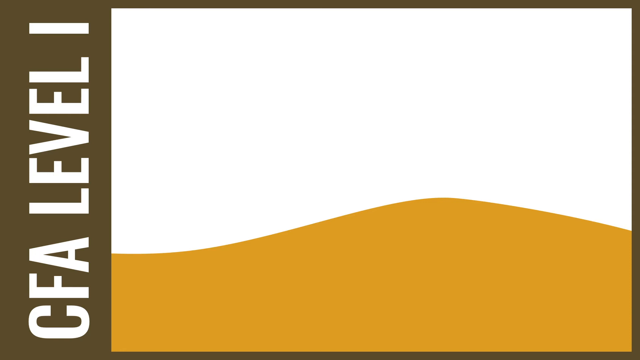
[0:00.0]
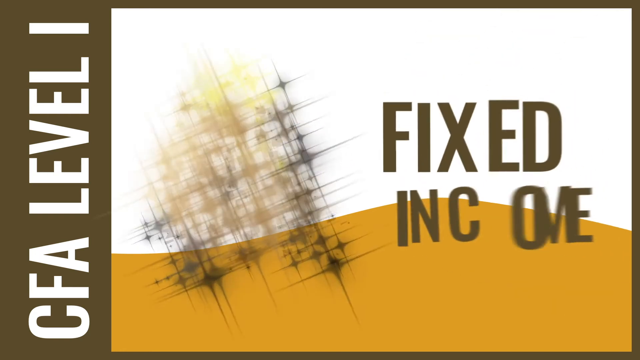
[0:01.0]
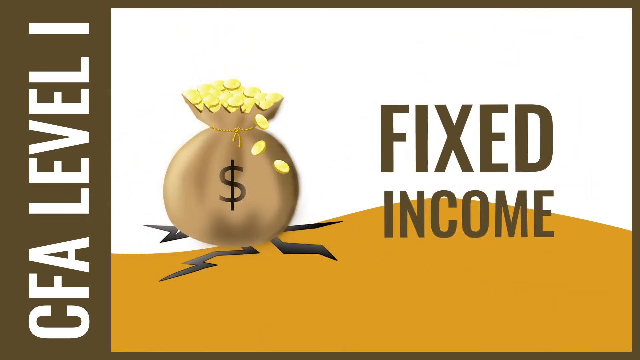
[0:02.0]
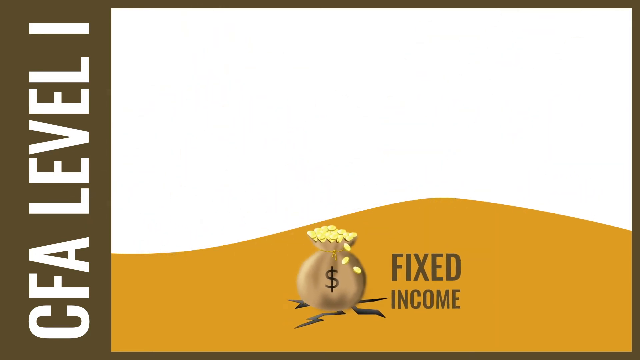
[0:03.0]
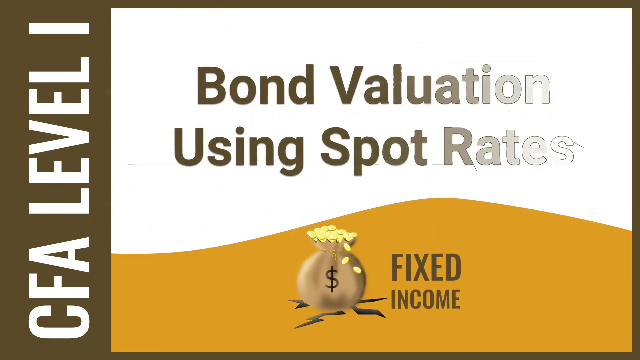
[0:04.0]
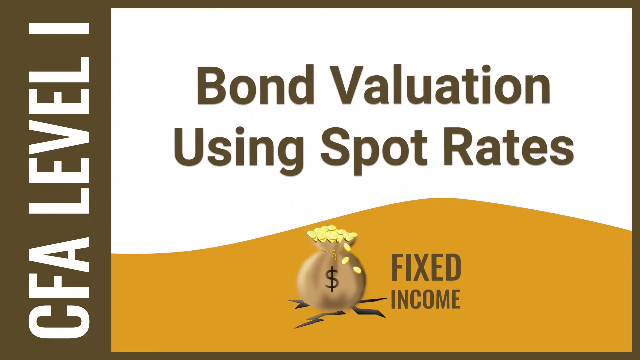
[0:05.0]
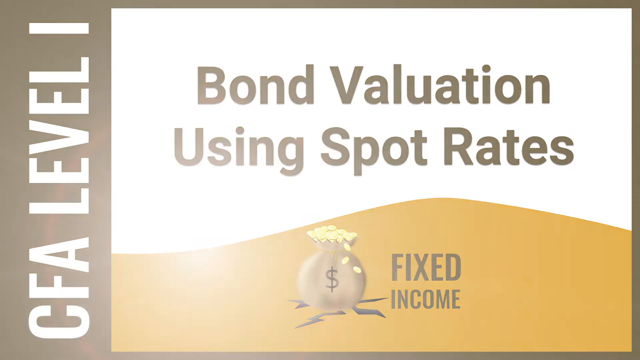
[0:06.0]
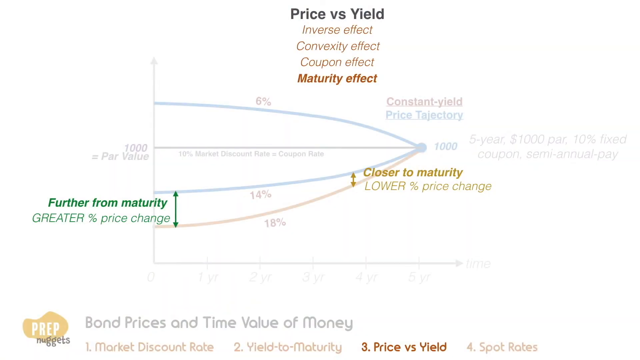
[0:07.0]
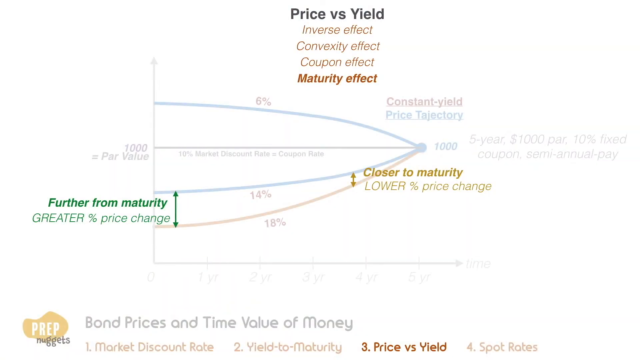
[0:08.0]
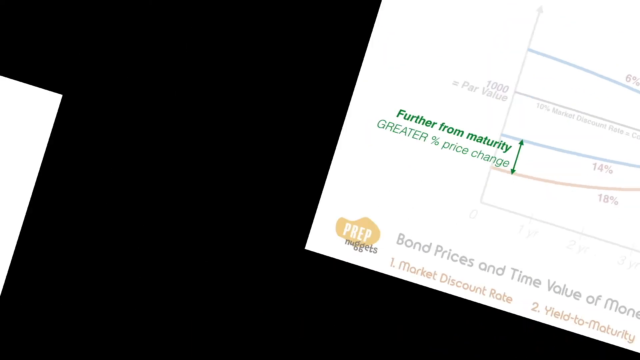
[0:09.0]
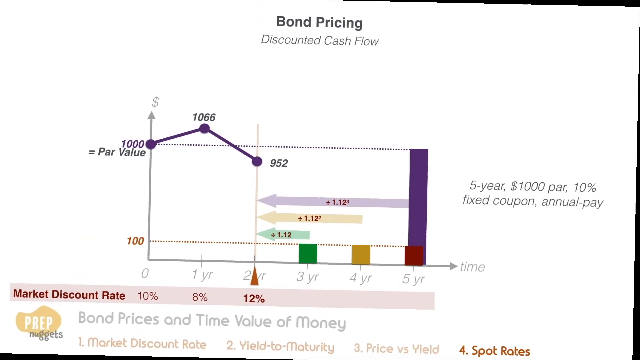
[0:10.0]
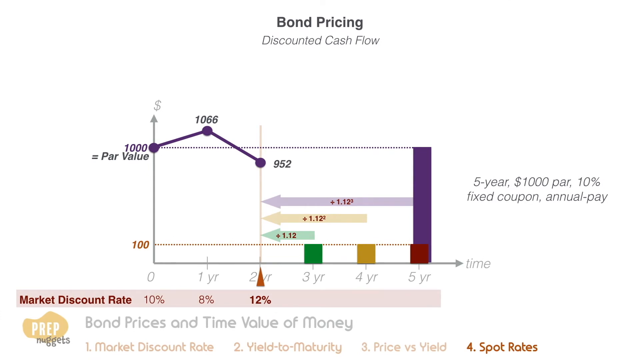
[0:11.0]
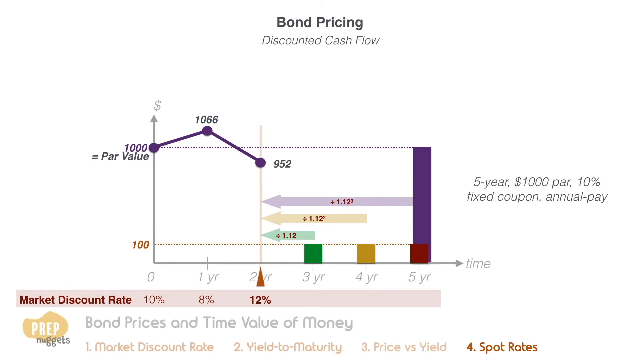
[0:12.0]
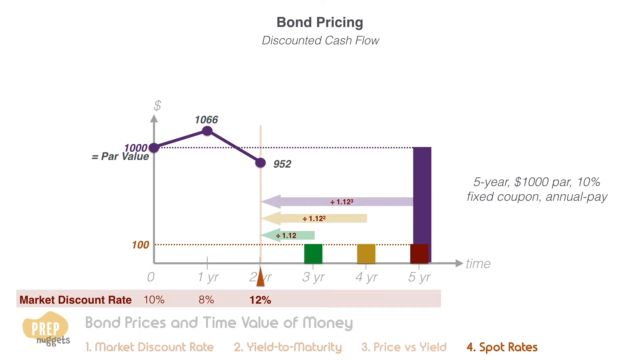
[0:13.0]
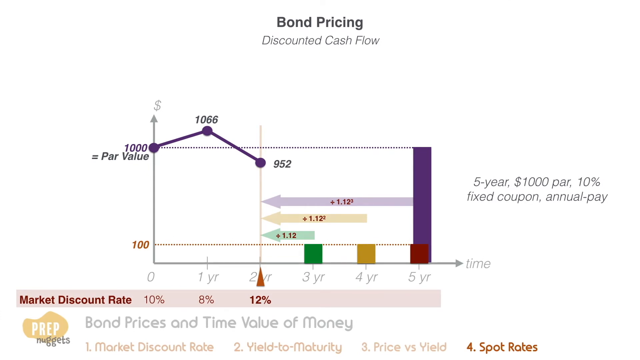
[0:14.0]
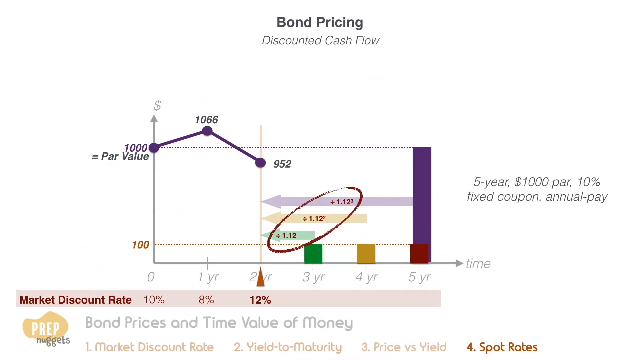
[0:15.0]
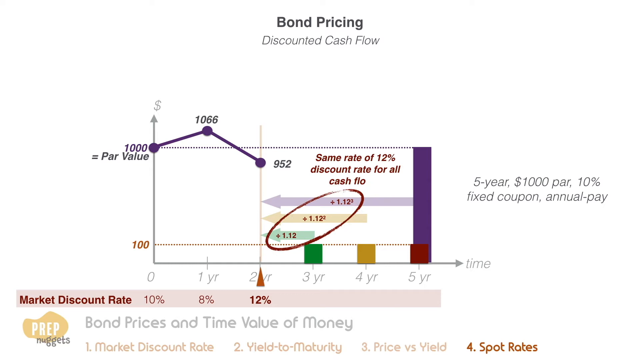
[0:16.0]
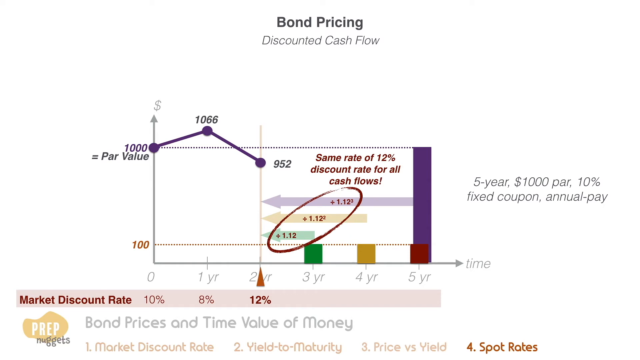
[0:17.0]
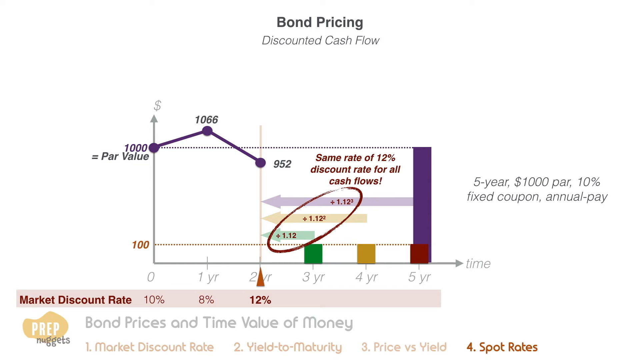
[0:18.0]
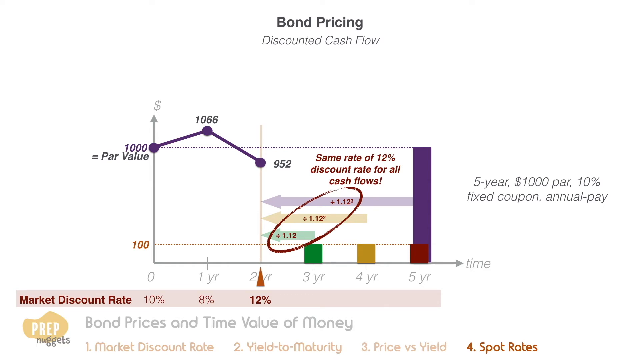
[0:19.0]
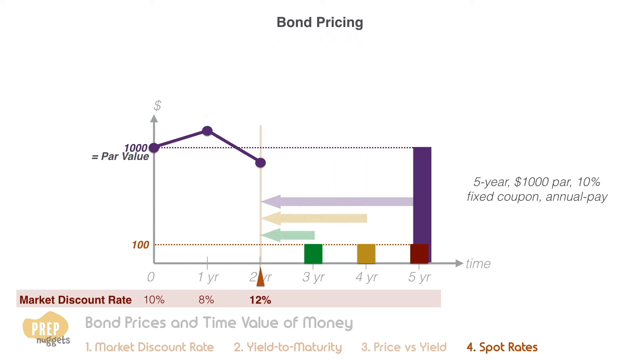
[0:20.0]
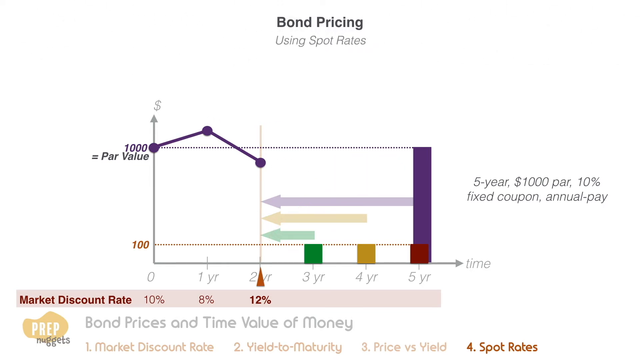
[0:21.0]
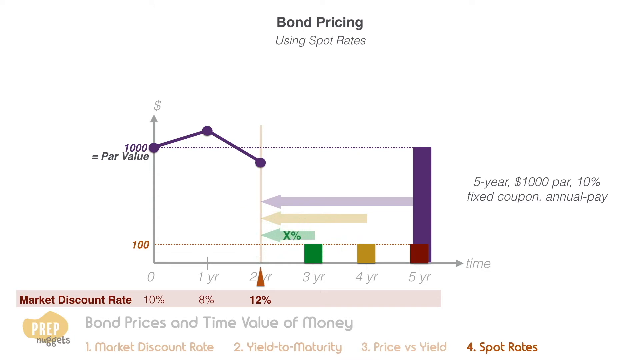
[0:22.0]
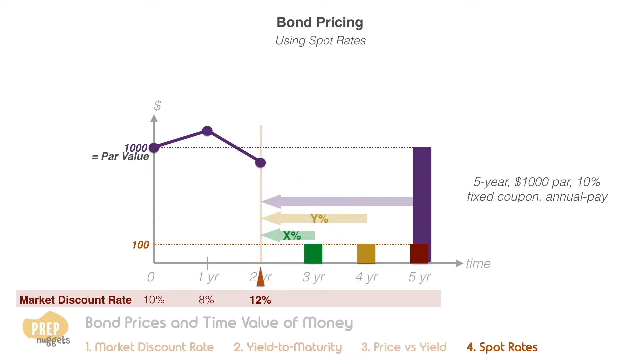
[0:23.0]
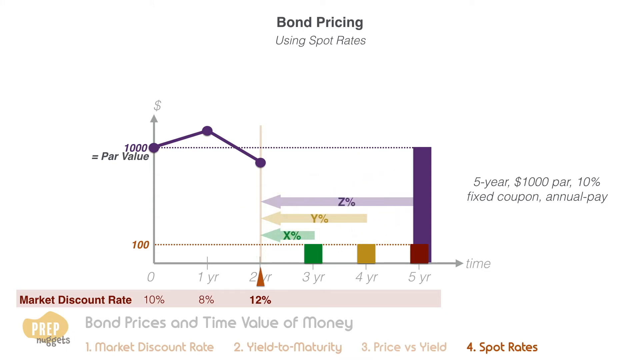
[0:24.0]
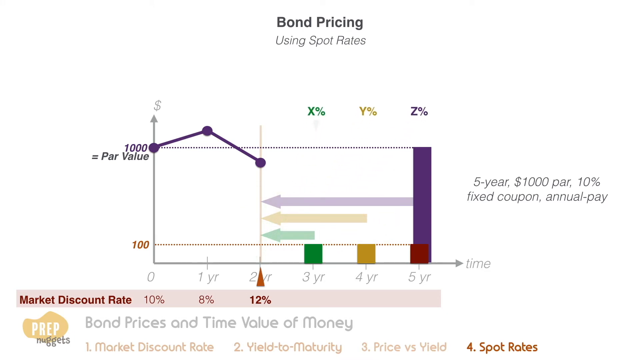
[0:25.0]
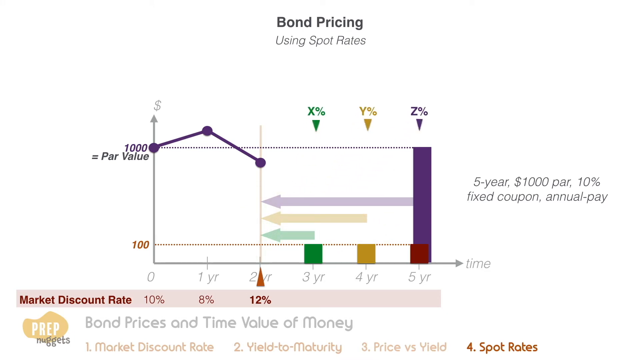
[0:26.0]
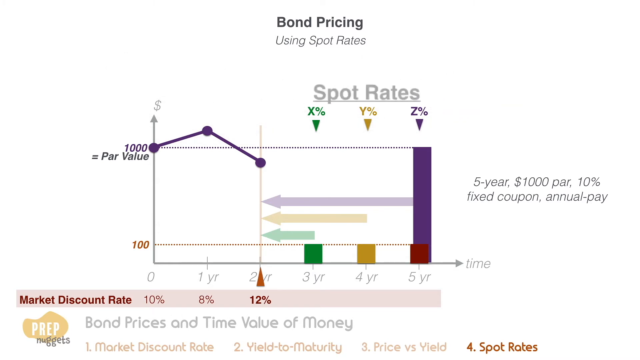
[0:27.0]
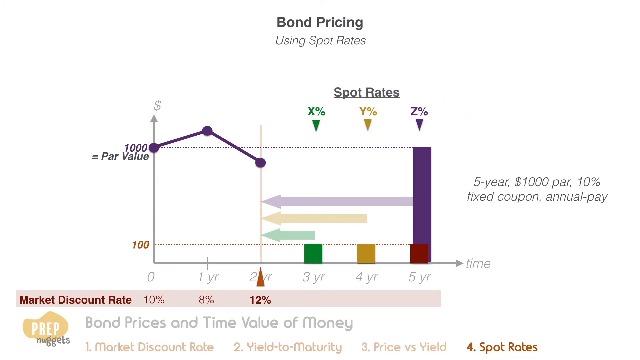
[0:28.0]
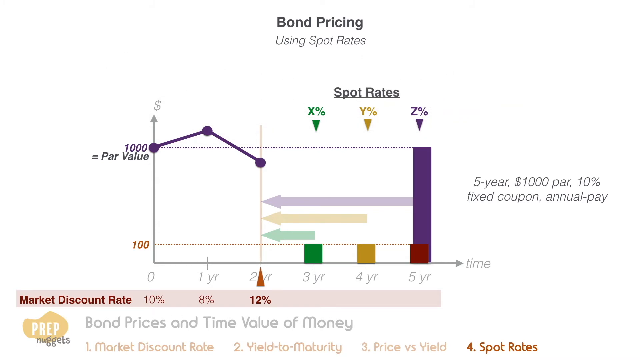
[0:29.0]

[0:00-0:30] A banner on the side reads "CFA" alongside what looks like a picture of a dune hill. Text then reads "fixed income" with a money bag next to it, followed by "bond valuation using spot rates". Once that leaves the screen, a graph appears dealing with price versus yield, the inverse effects, the convexity effects, the coupon effect and the maturity effect. The graph shows 1000 par value on the Y scale and apparently time on the X scale, and it has three different lines. At the bottom, text reads "bond prices and time value of money" with a numbered list that includes "market discount rate" and "price versus yield". The video very quickly moves to a different graph titled "bond pricing", where the Y axis says 1000 equals par value and starts at 100, and the X axis shows the years. It appears to be looking at year 2 or year 12, with a market discount rate of 12%. The top banner adds that the same 12% discount rate applies to all. A numbered list reads: one, market discount rate; two, yield to maturity; three, rates versus yield; four, spot rates. The spot rates item appears to be the focus. Text then says that using spot rates, they can be named X, Y and Z.